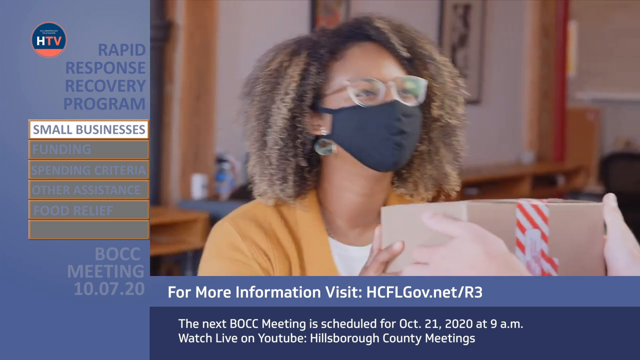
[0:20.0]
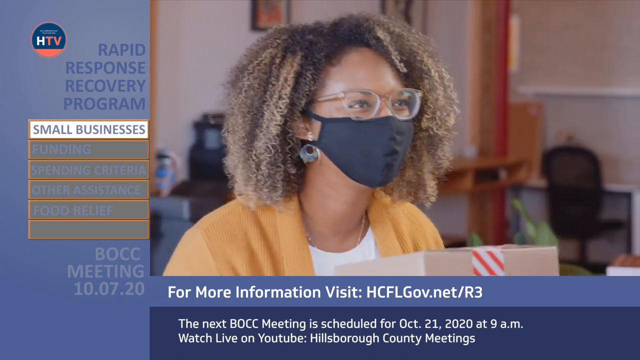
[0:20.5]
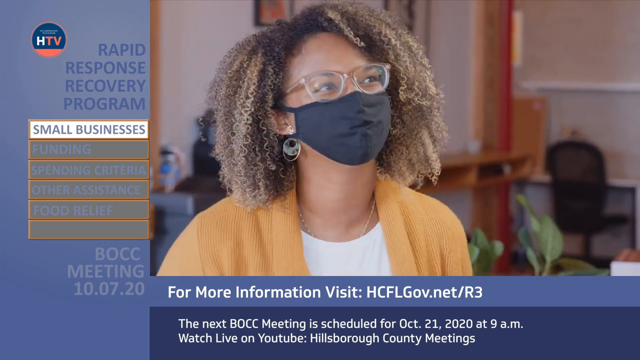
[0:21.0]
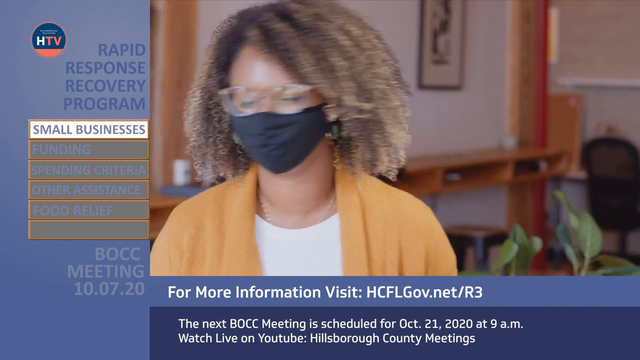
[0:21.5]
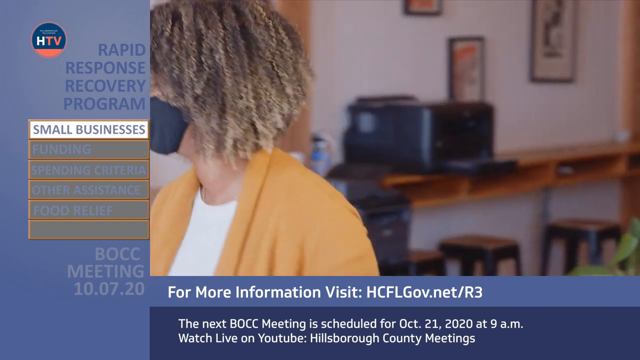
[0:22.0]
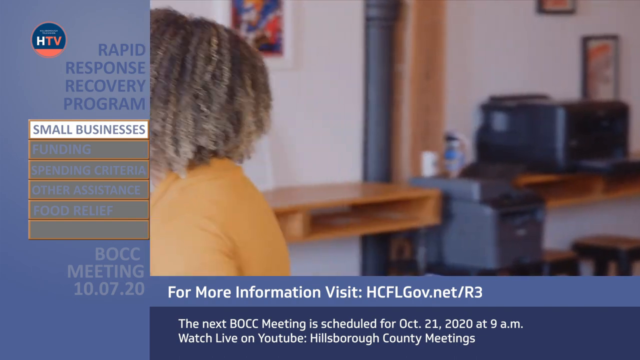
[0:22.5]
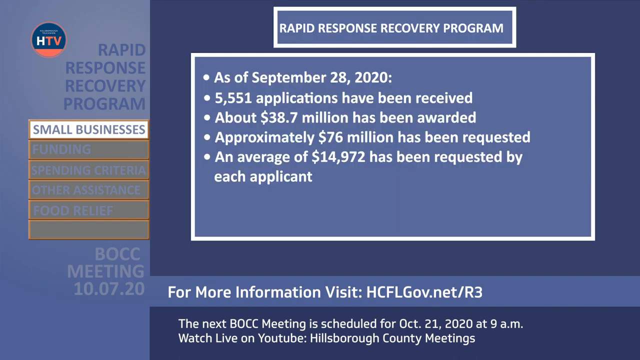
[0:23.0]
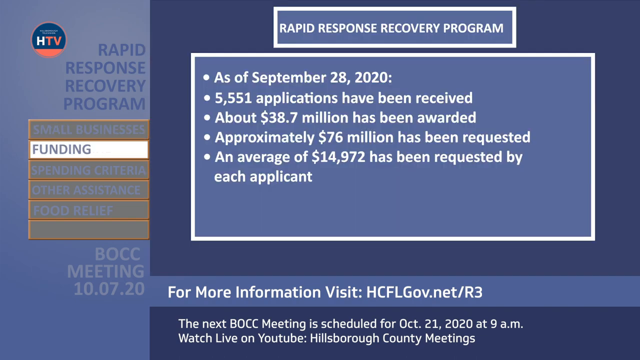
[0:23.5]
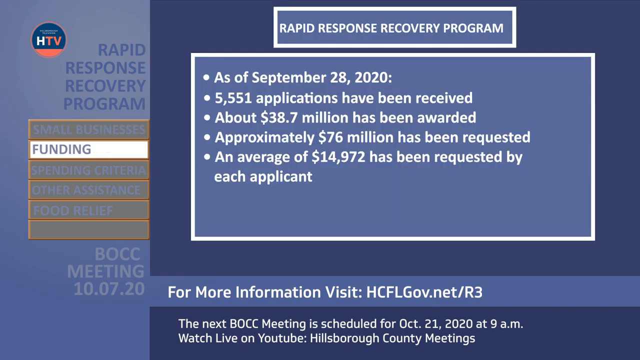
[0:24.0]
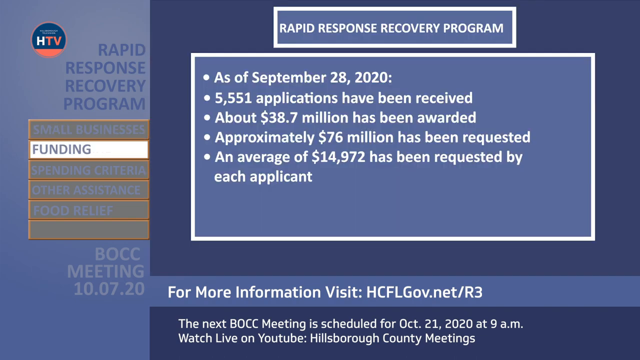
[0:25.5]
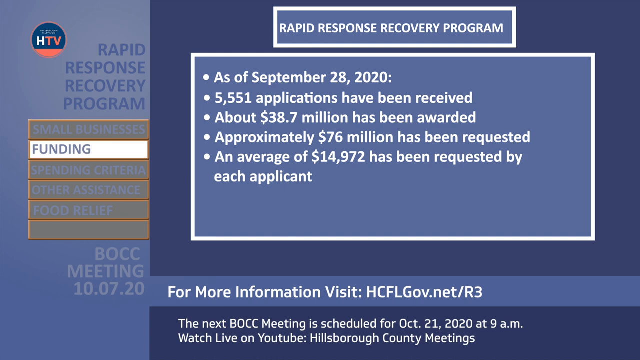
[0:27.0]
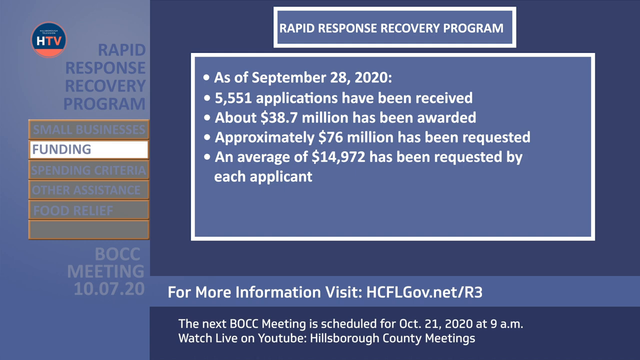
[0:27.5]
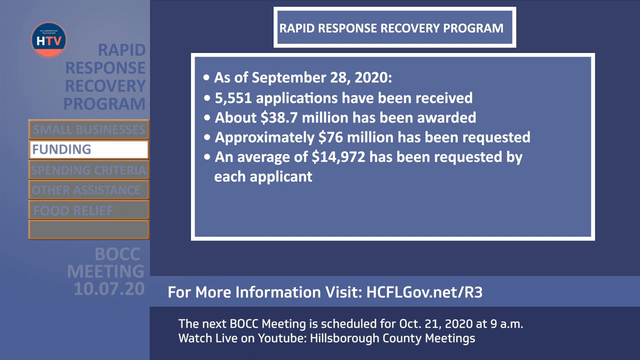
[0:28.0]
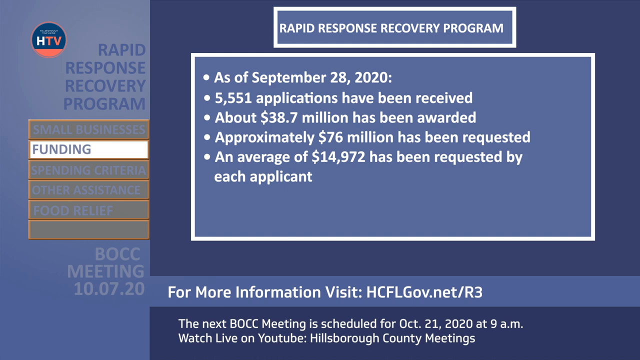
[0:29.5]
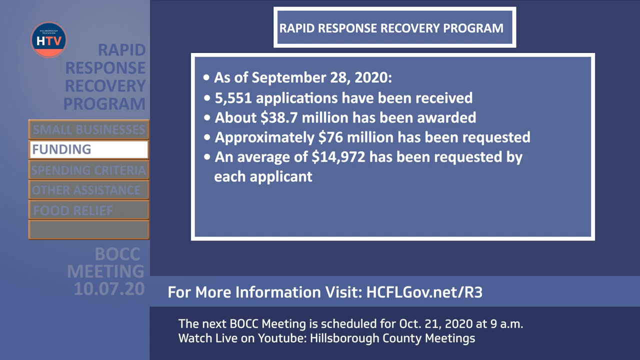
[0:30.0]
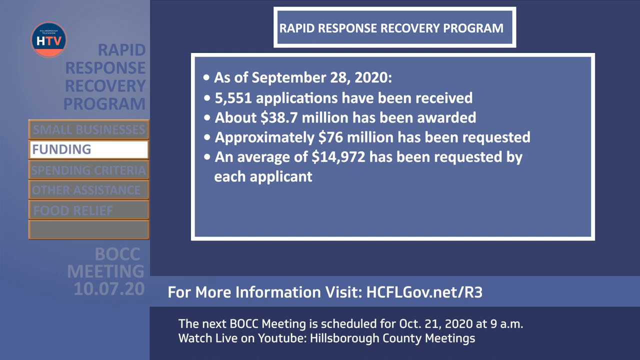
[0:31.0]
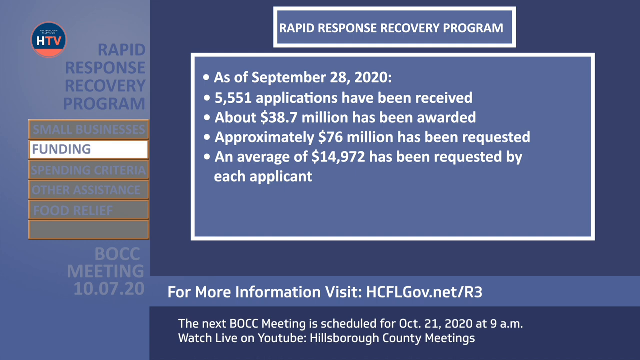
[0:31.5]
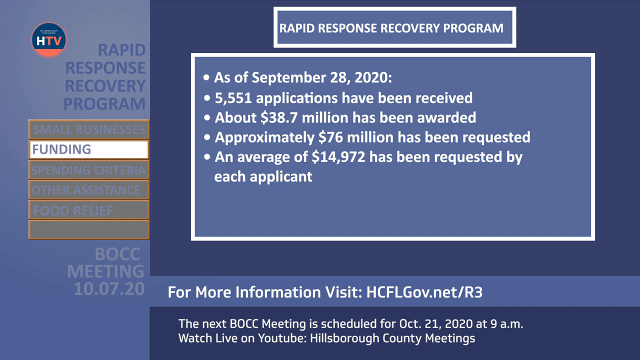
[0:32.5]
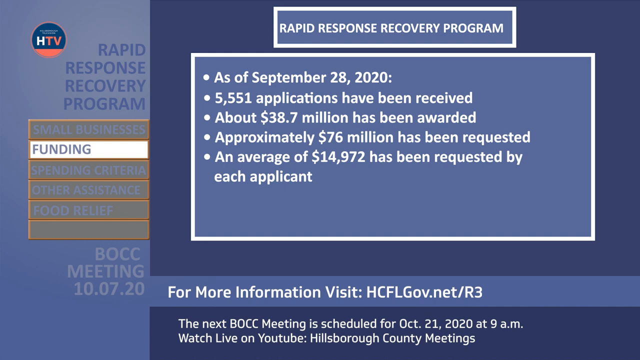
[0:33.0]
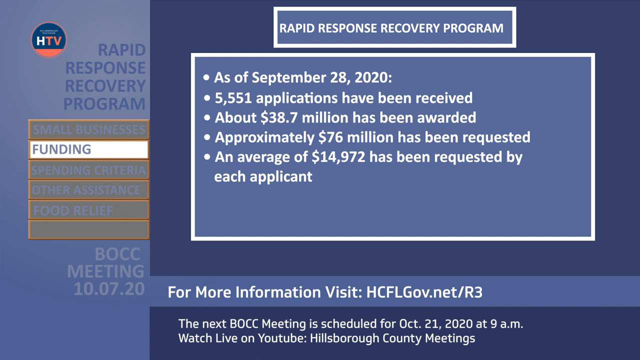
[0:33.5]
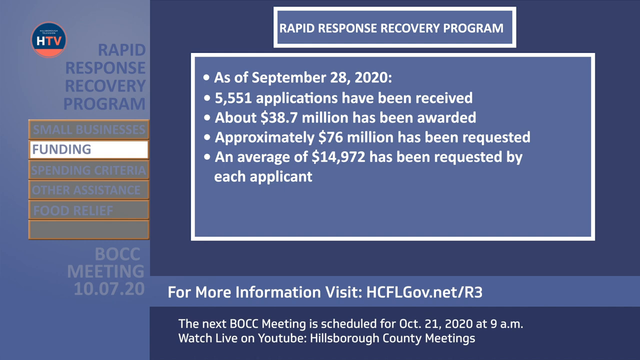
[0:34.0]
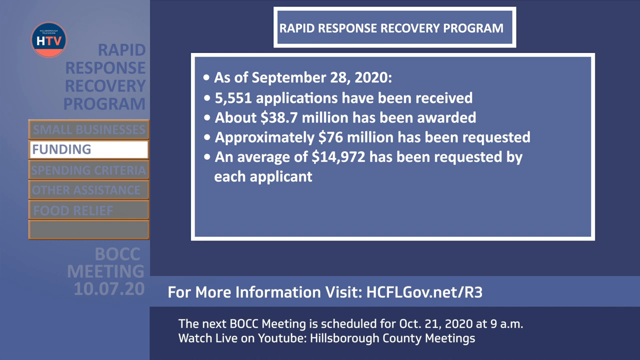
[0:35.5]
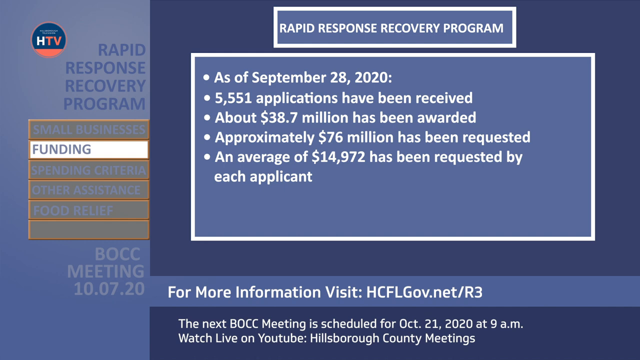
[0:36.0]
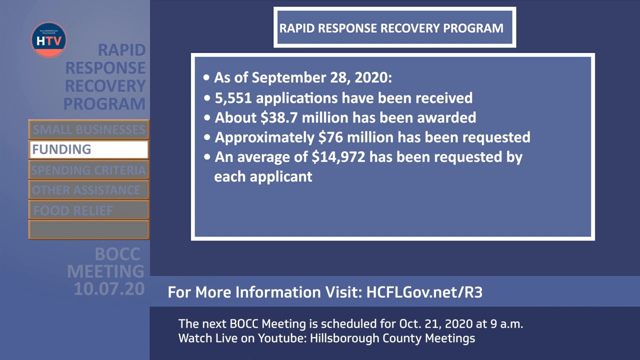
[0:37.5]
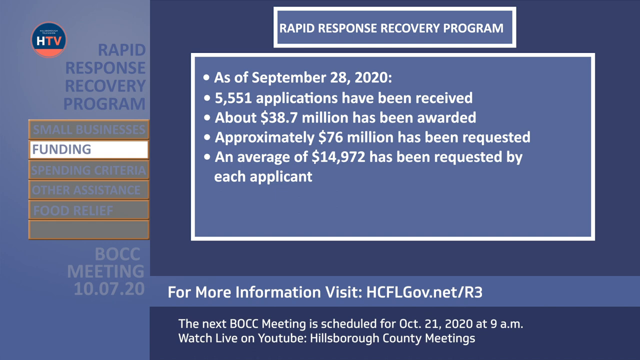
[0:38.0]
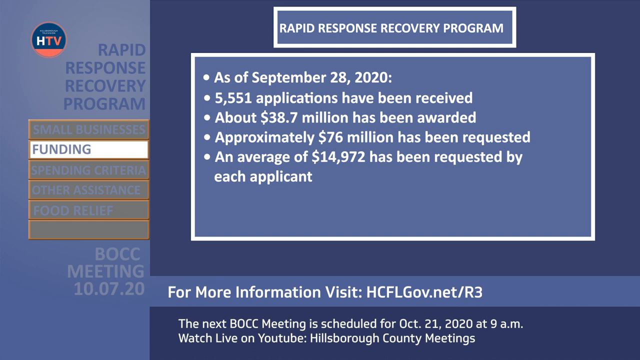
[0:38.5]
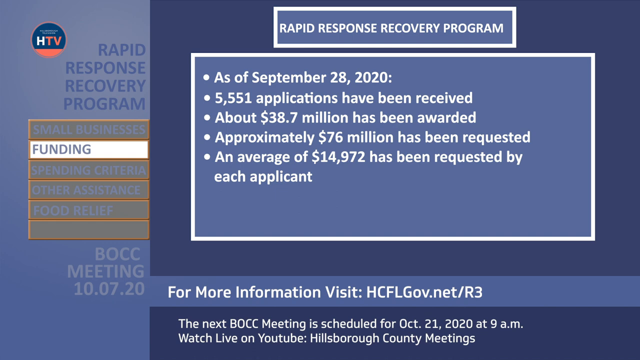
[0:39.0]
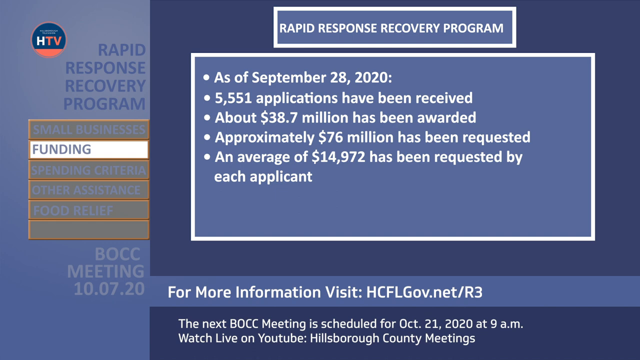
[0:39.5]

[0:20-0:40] A woman with wavy brown hair, wearing a black mask and glasses, picks up a package from someone. She seems to nod, moving her head up and down, as she takes the package and starts to walk away. As the scene finishes, a graphic resembling a PowerPoint slide appears. At the top right, the title reads "Rapid Response Recovery Program" in white, in a horizontal rectangular call-out box with a lighter blue background and a white border. Below it is body text with bullet points: "as of September 28, 2020", "5,551 applications have been received", "about $38.7 million has been awarded", "approximately $76 million has been requested", and "an average of $14,972 has been requested by each applicant". On the left side, the funding section is highlighted in white, apparently marking the topic currently covered on the right.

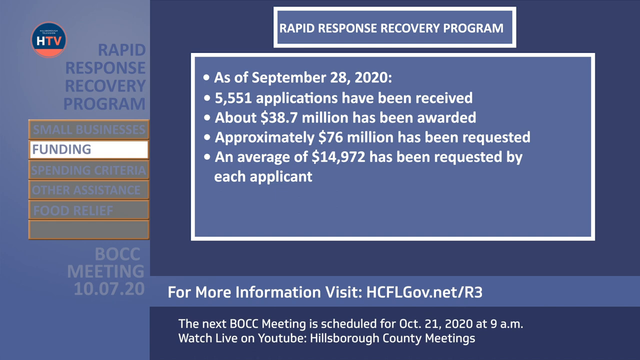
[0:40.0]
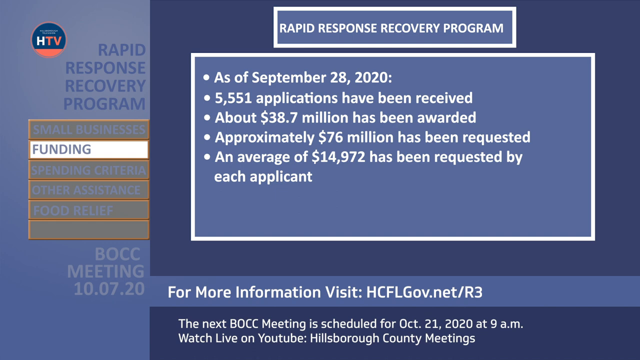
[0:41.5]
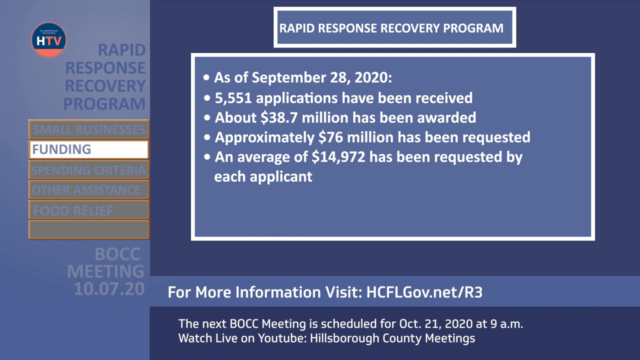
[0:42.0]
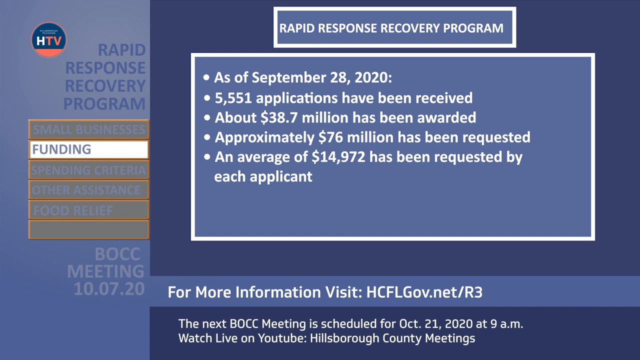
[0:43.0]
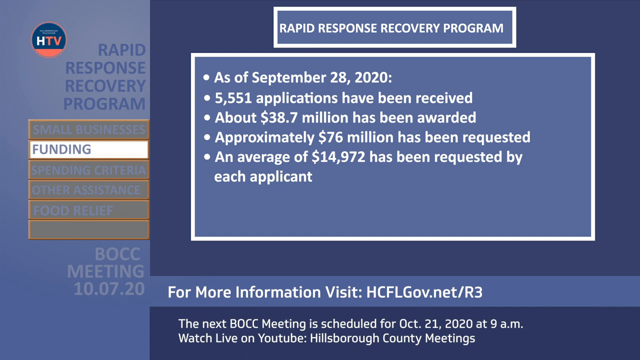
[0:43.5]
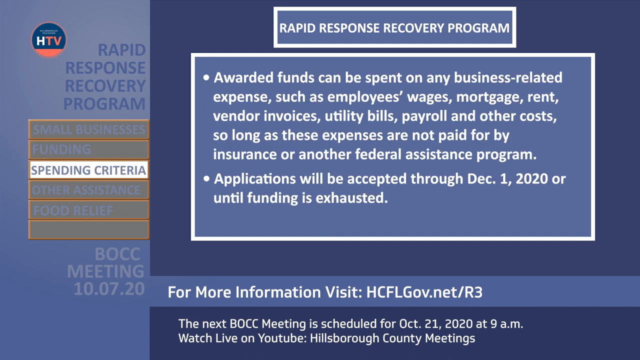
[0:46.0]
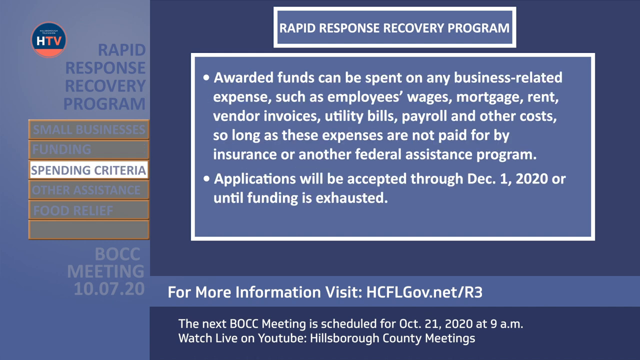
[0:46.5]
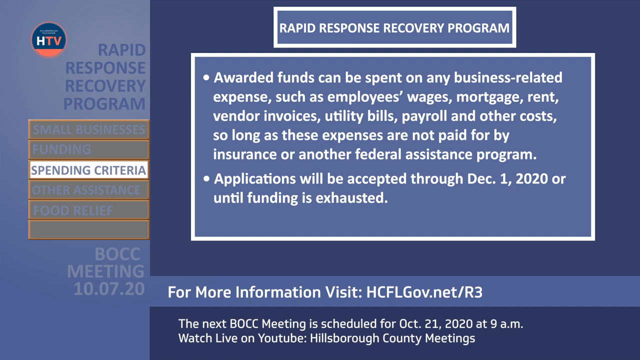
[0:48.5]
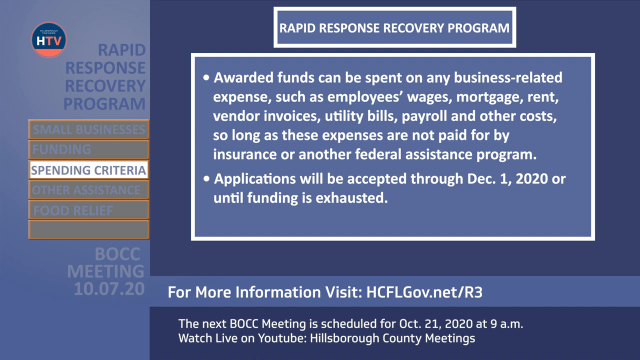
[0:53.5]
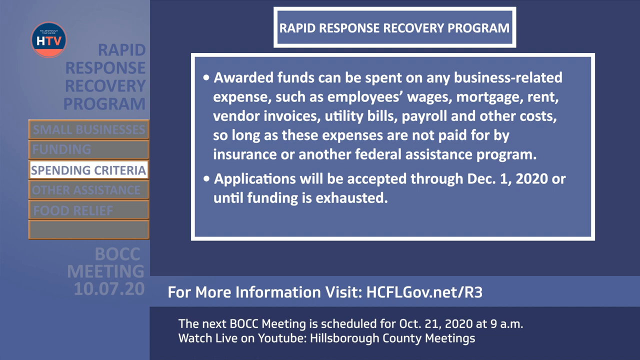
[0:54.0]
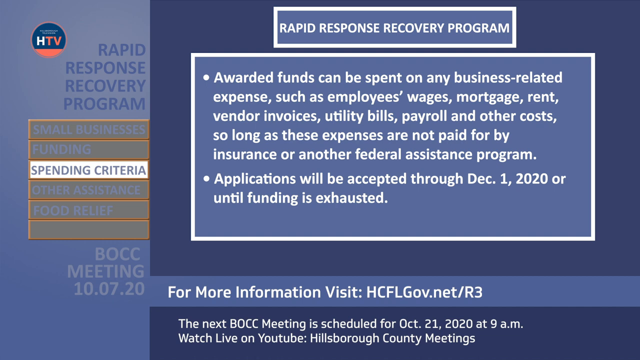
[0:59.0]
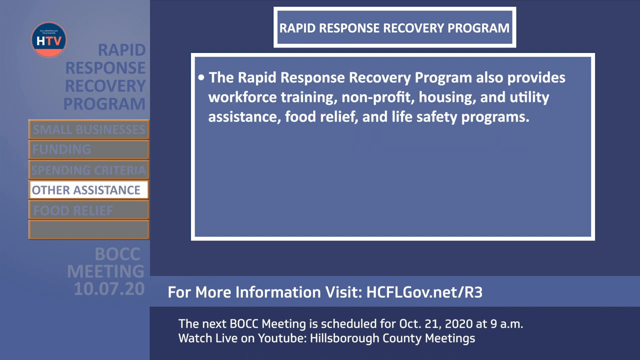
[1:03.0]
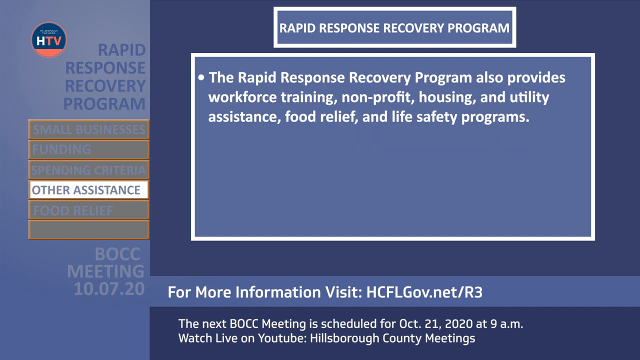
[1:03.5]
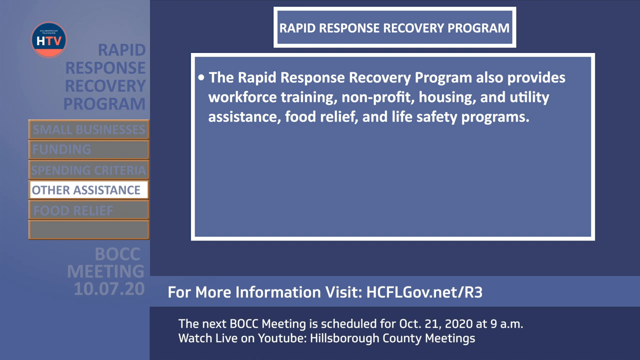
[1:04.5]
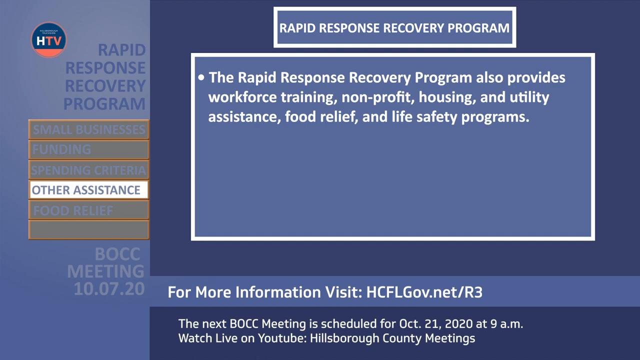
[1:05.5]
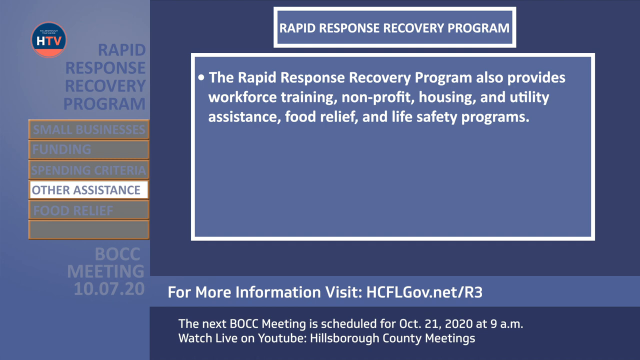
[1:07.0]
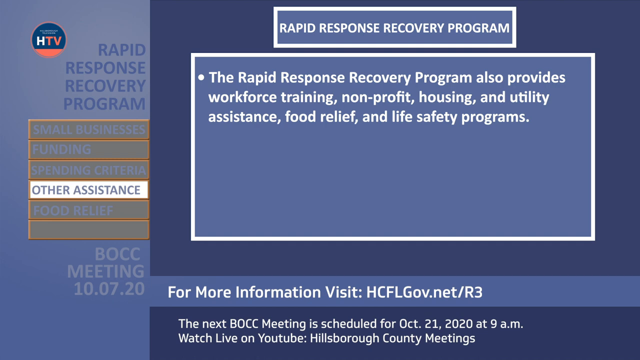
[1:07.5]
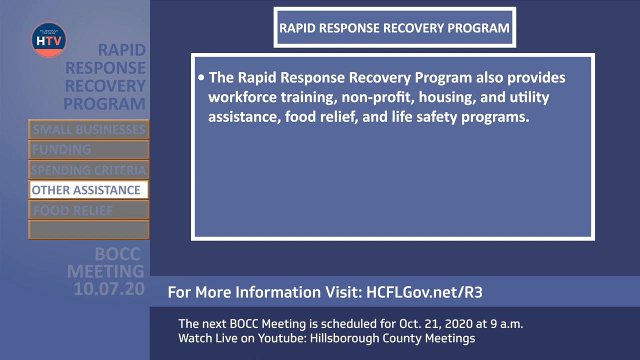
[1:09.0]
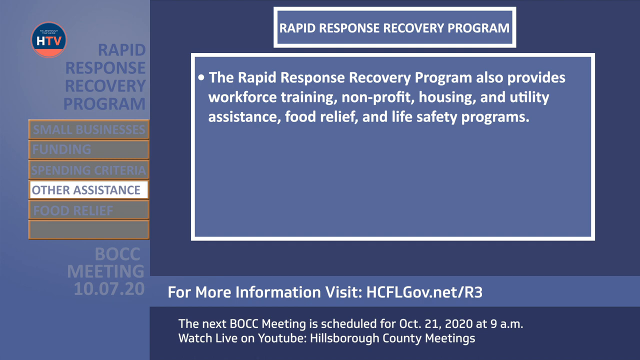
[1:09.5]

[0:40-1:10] The funding slide is shown first, then the video quickly cuts to a slide where a different section on the left is highlighted: spending criteria. The title at the top right still says "rapid response recovery program" in white lettering, but the body now has only two longer bullet points in white. The first says "awarded funds can be spent on any business-related expense such as employees' wages, mortgage, rent, vendor invoices, utility bills, payroll, and other costs so long as these expenses are not paid for by insurance or another federal assistance program." The second says "applications will be accepted through December 1st, 2020 or until funding is exhausted." The slide stays on screen for a while, possibly while someone talks. Various call-outs around the sides and bottom of the page show the meeting date and information about the next scheduled meeting.